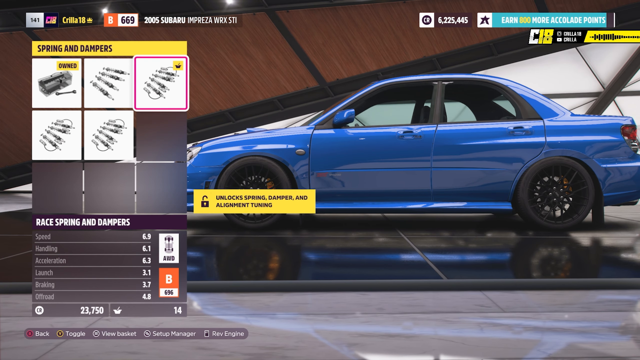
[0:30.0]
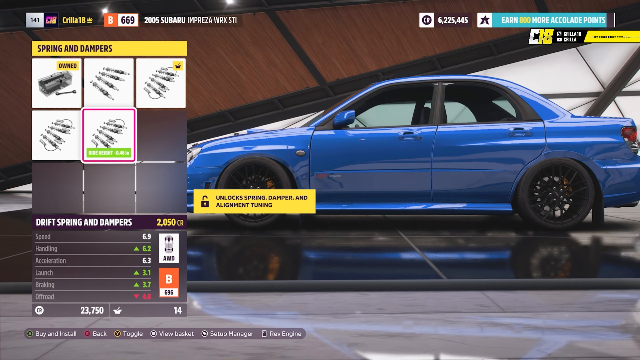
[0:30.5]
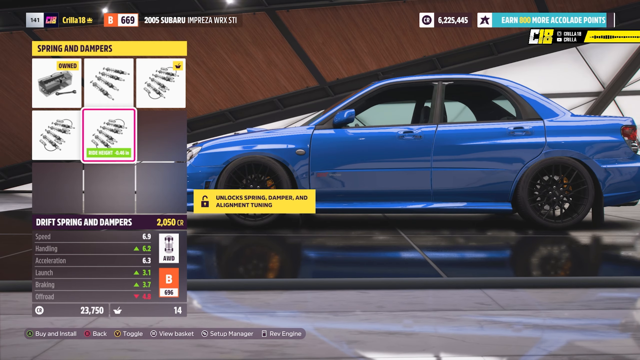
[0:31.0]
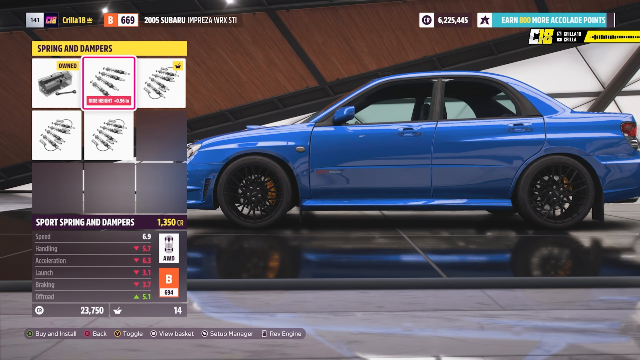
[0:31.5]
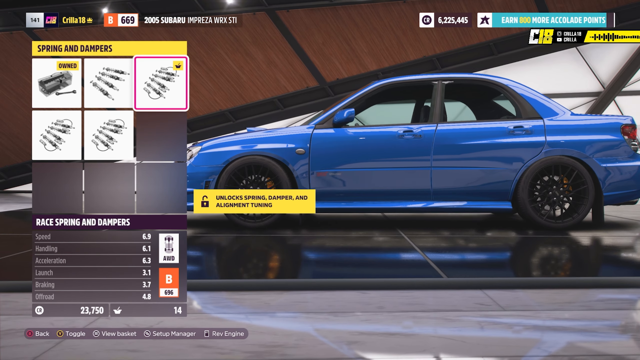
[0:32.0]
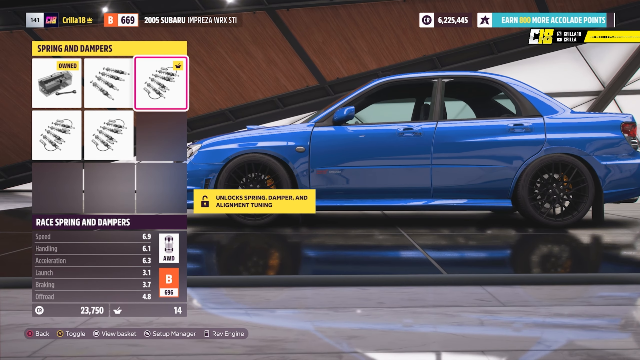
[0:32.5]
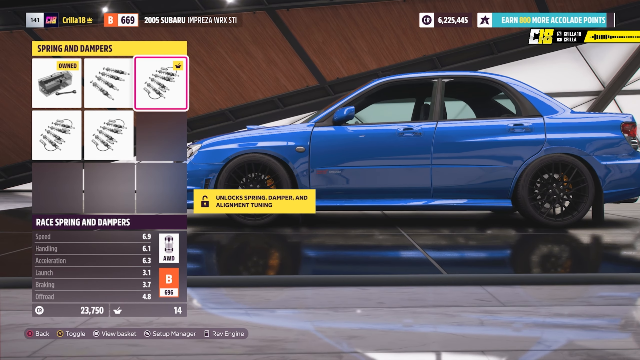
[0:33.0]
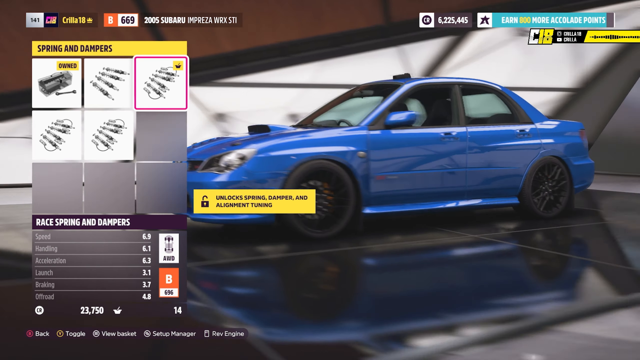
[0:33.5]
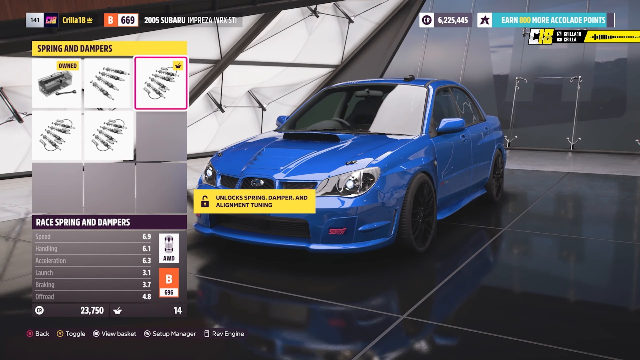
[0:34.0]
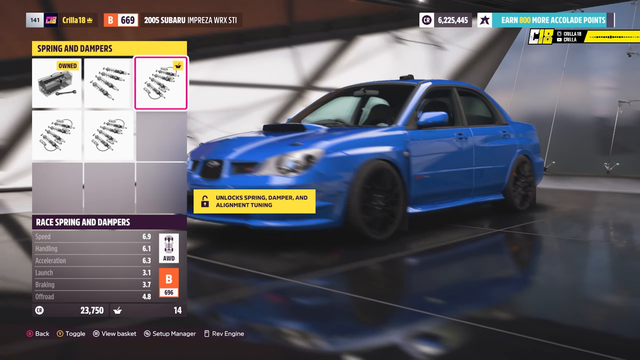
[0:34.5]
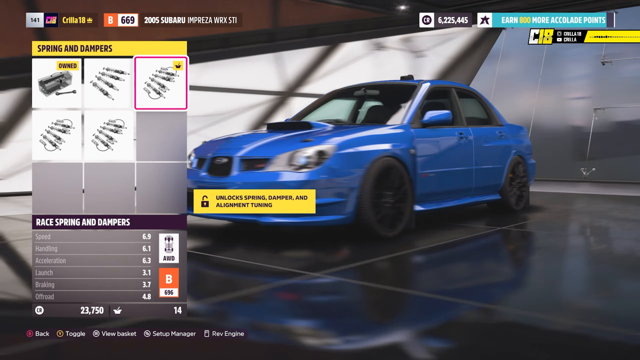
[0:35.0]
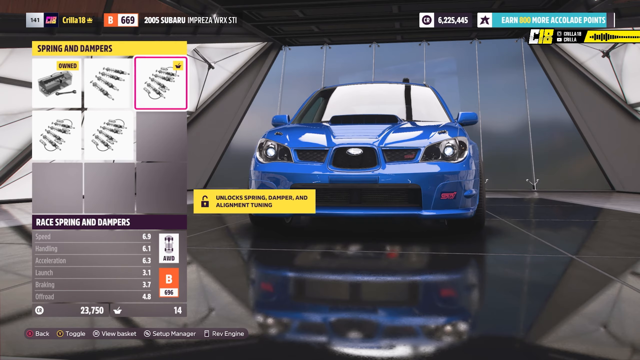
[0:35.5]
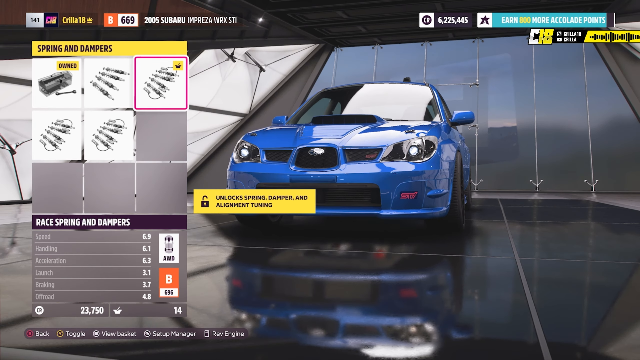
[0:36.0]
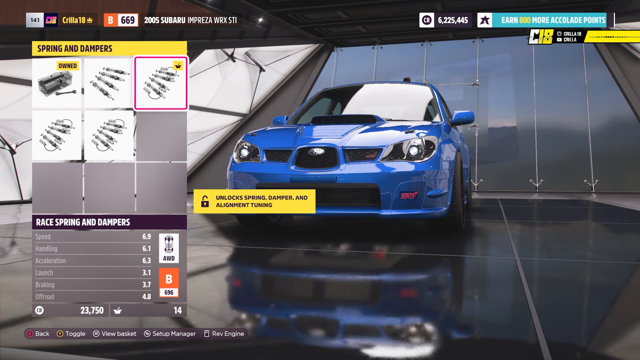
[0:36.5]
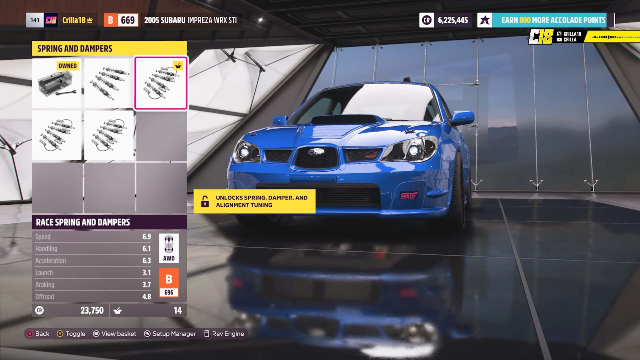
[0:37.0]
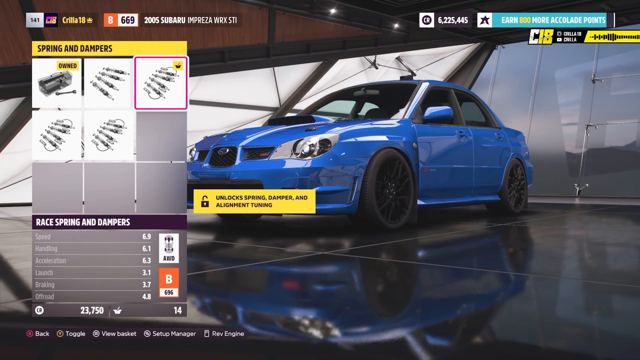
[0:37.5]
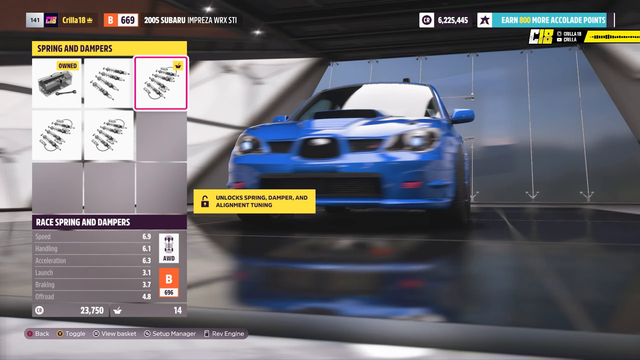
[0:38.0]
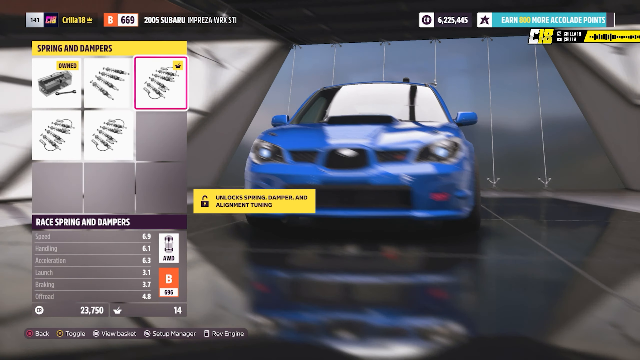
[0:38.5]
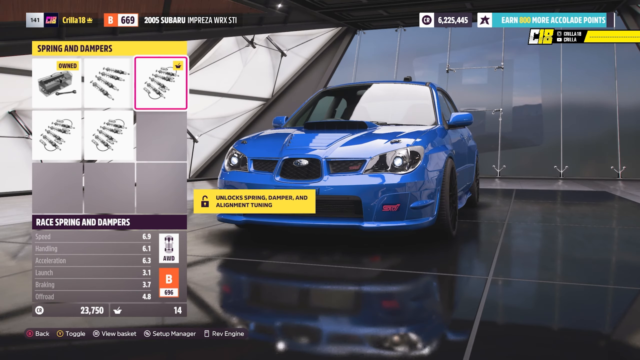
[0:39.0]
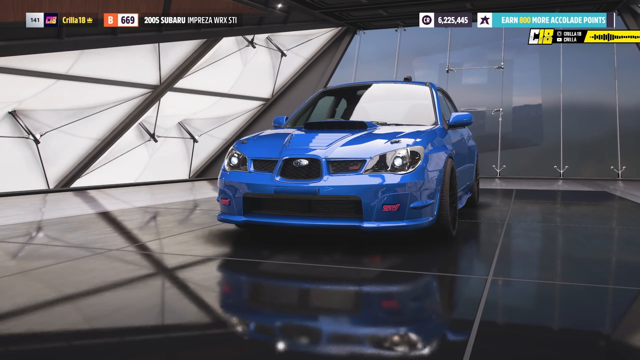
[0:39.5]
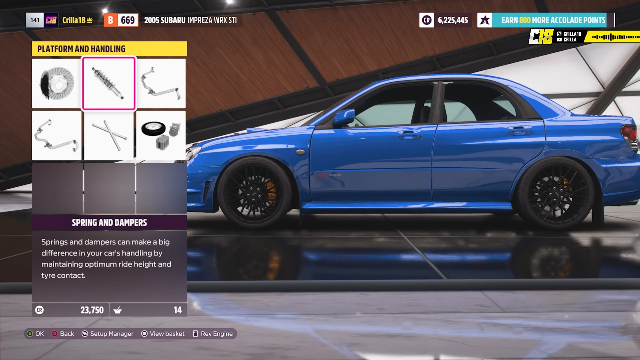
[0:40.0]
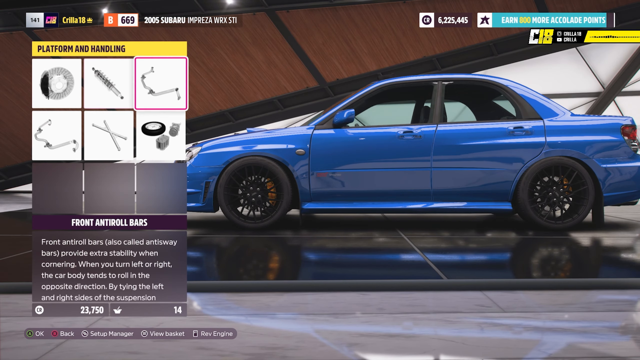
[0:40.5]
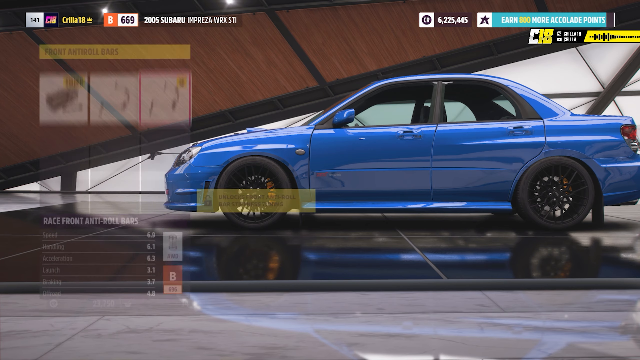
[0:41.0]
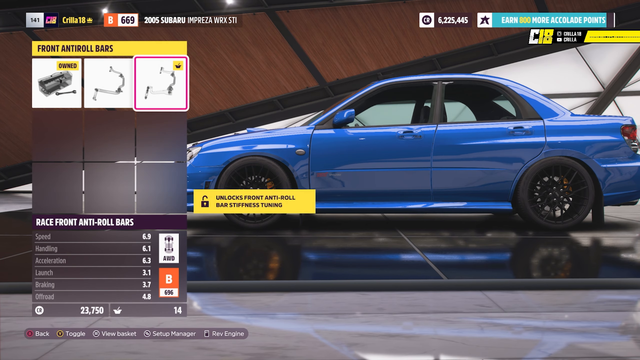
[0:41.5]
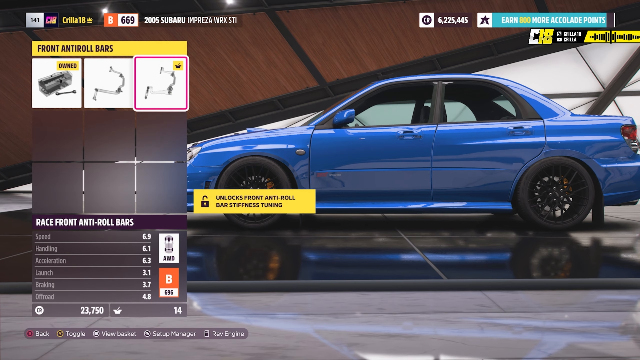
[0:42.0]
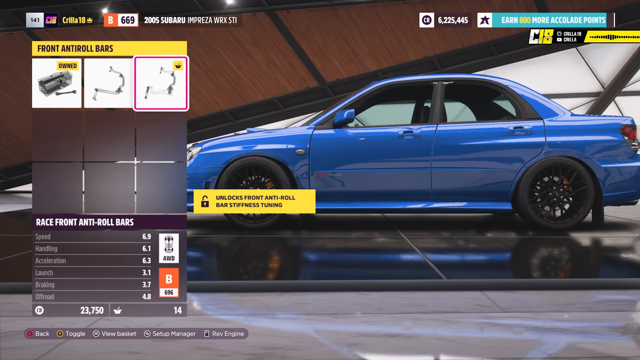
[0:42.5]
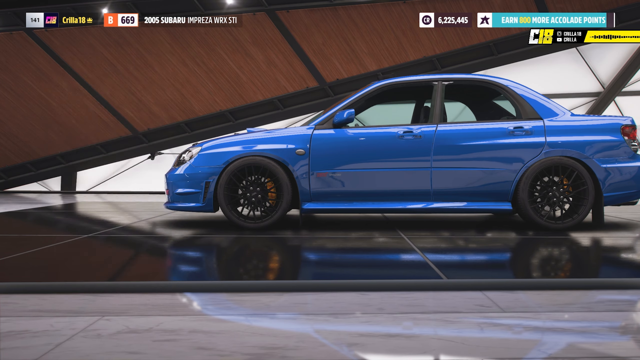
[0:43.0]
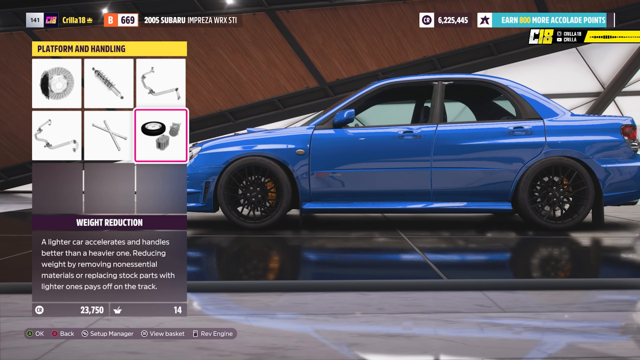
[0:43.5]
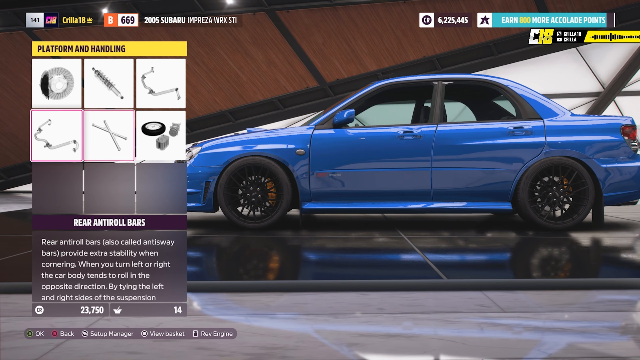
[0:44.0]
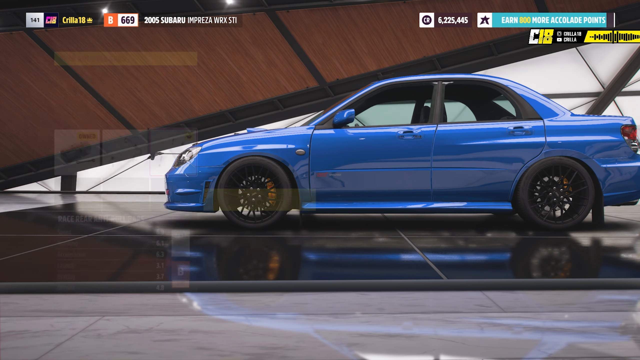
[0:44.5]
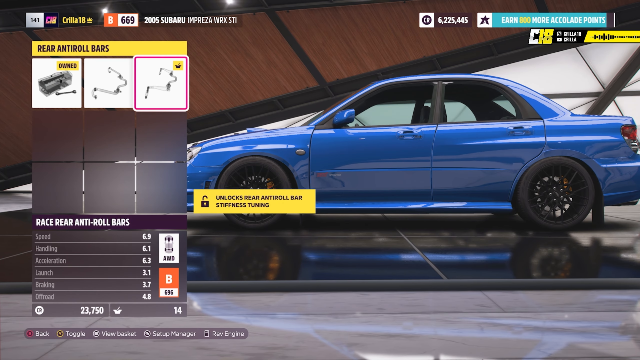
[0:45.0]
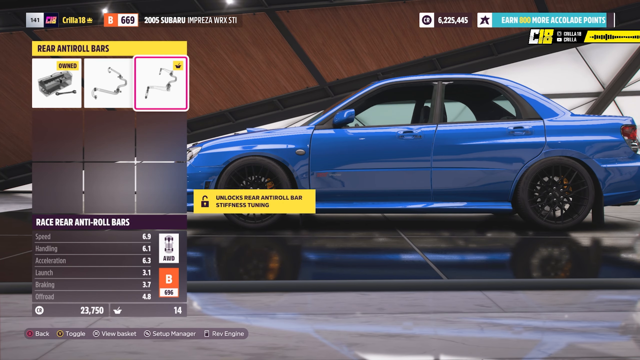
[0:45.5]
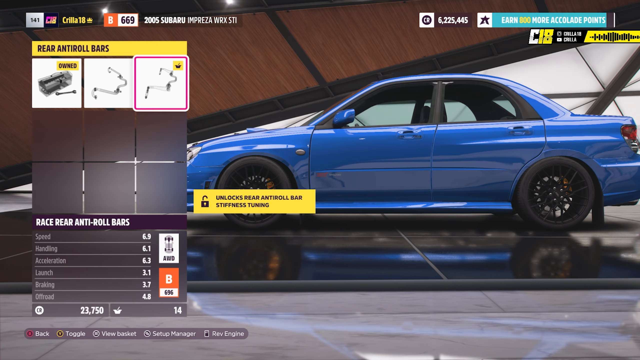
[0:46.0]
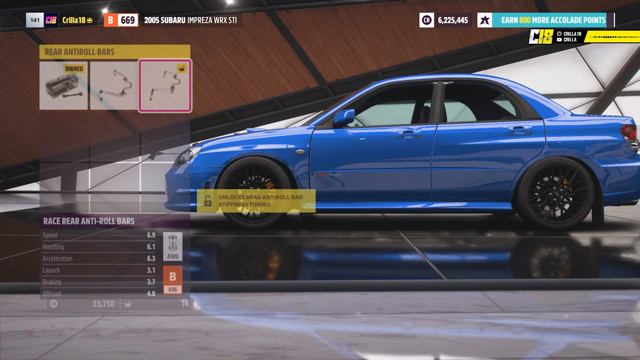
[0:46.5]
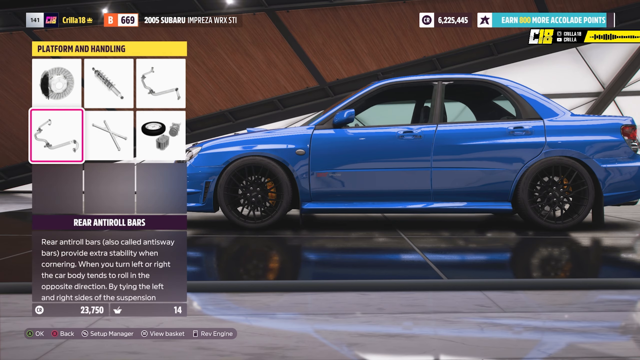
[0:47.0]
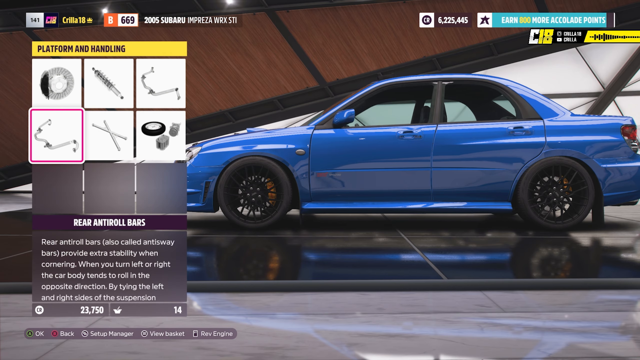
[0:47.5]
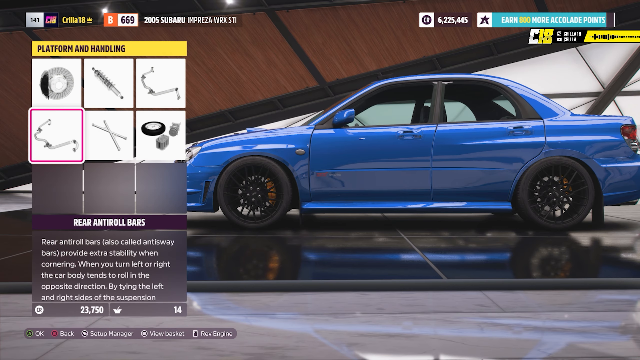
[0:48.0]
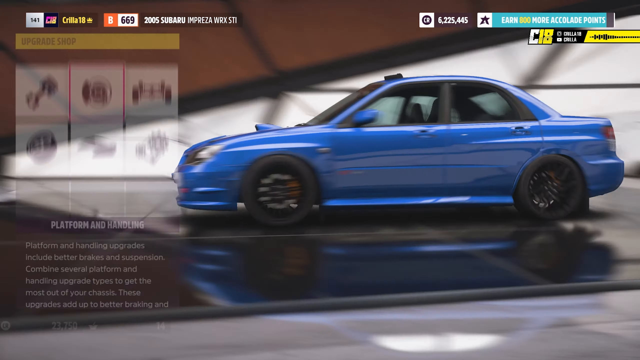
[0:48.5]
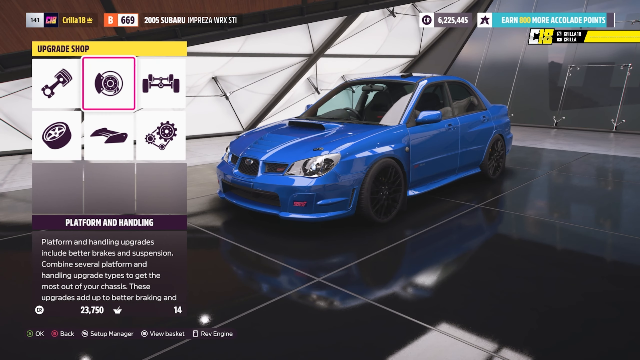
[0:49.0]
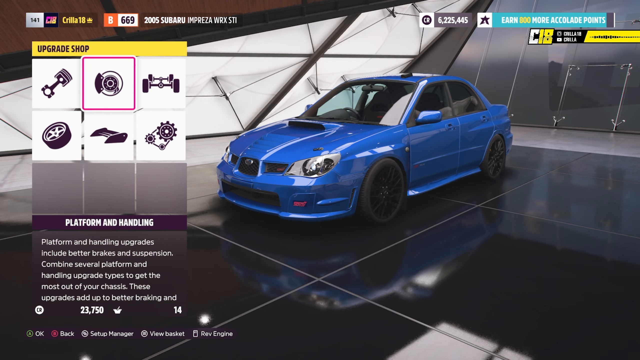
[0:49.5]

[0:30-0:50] The player looks at the springs and dampers options and seemingly settles on the race springs and dampers. They rotate the camera a little, looking back and forth, then go back to the previous menu and look at the platform and handling option for the front anti-roll bars. They seem satisfied with the default option, head back to the menu, and look at the rear anti-roll bars, seemingly content with that option as well; they are presumably comparing the specs between the available options. A sound bar is visible at the top right. The player has credits in the 6 millions, while each option appears to cost only 24k credits.